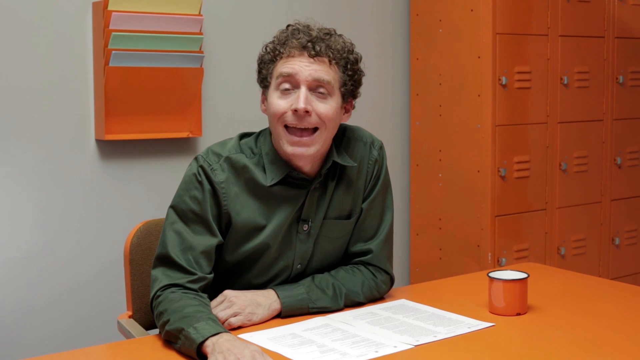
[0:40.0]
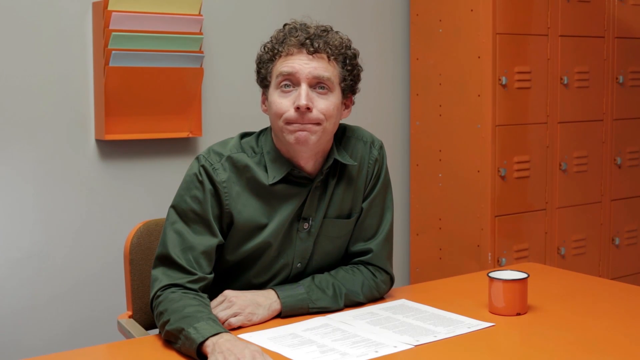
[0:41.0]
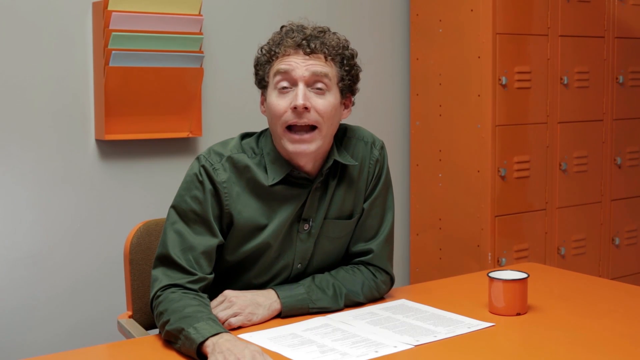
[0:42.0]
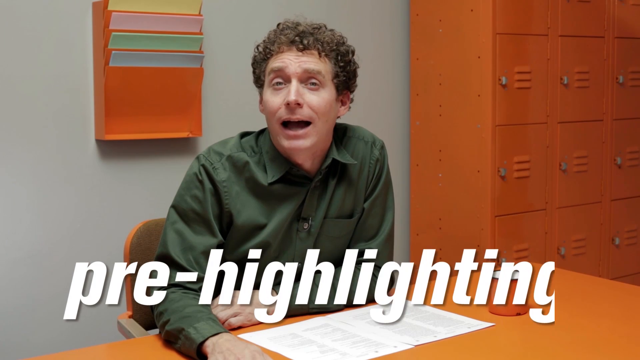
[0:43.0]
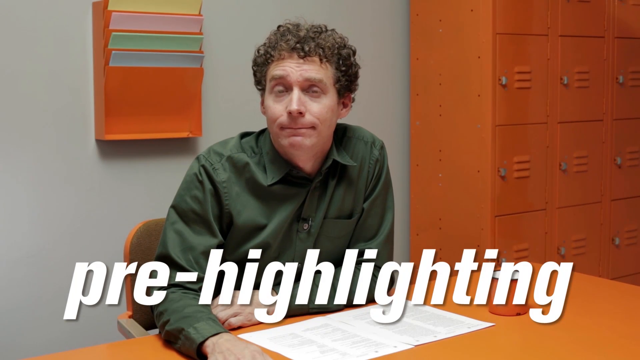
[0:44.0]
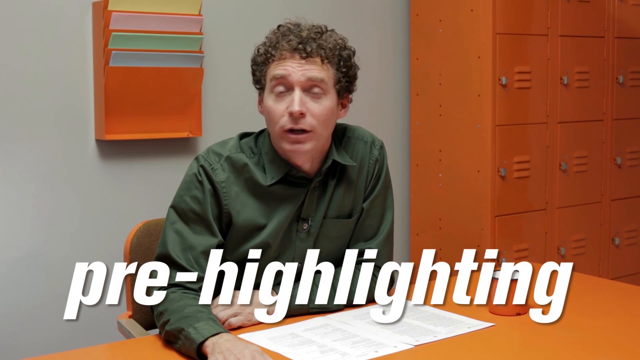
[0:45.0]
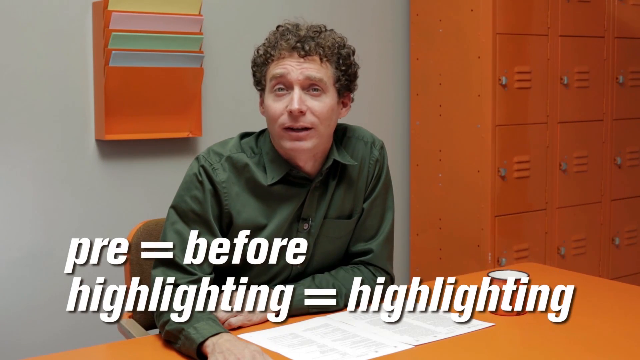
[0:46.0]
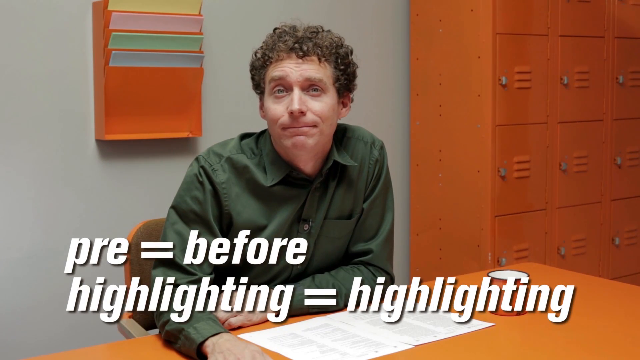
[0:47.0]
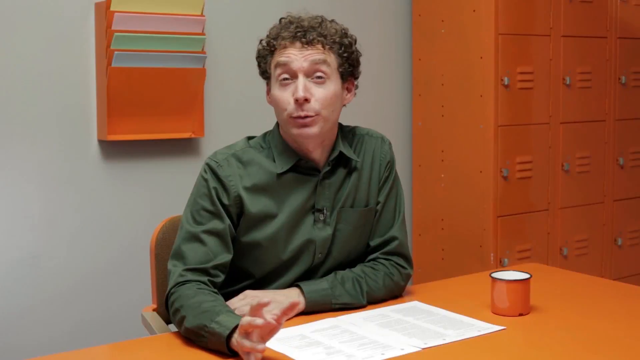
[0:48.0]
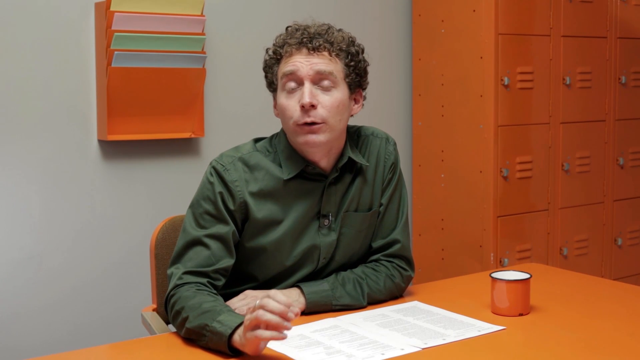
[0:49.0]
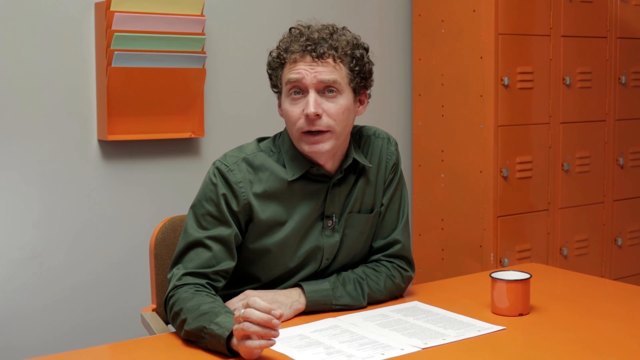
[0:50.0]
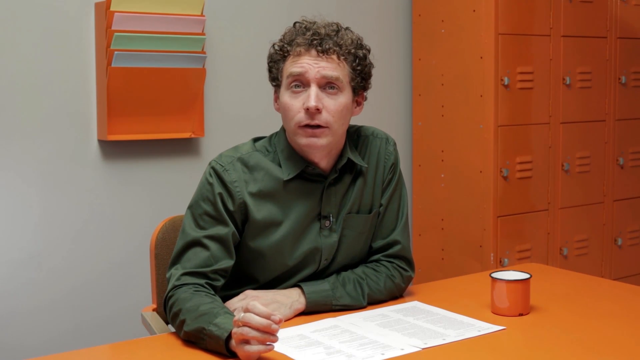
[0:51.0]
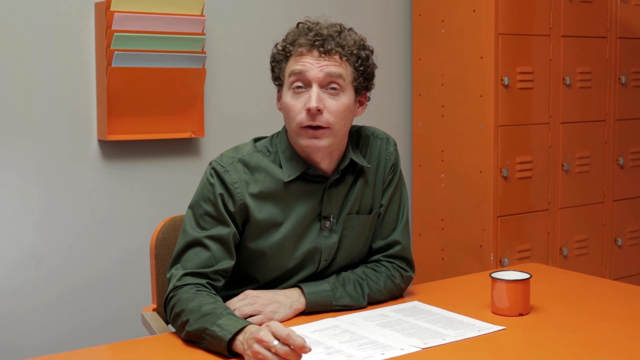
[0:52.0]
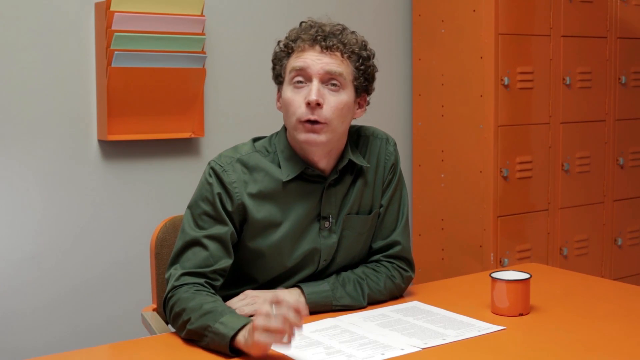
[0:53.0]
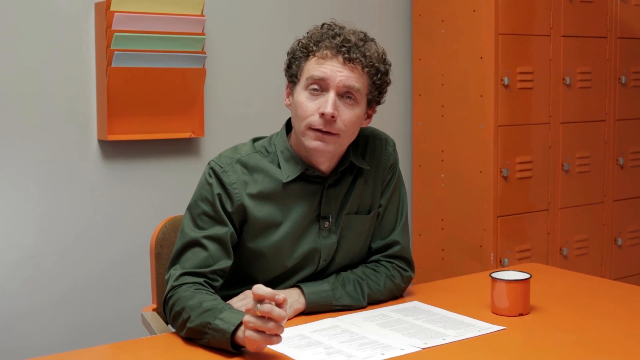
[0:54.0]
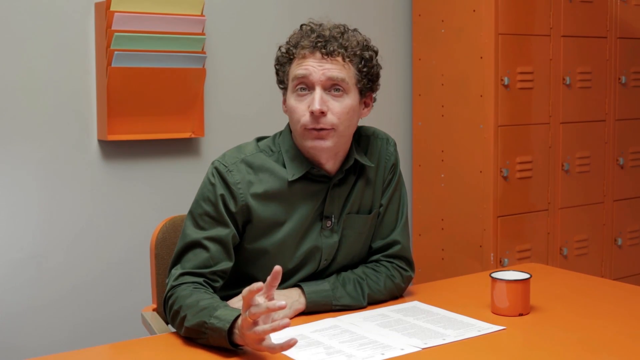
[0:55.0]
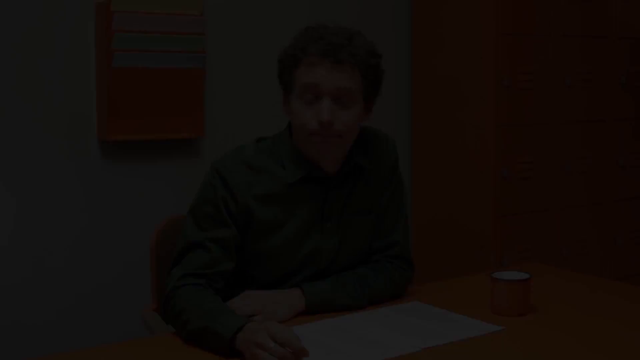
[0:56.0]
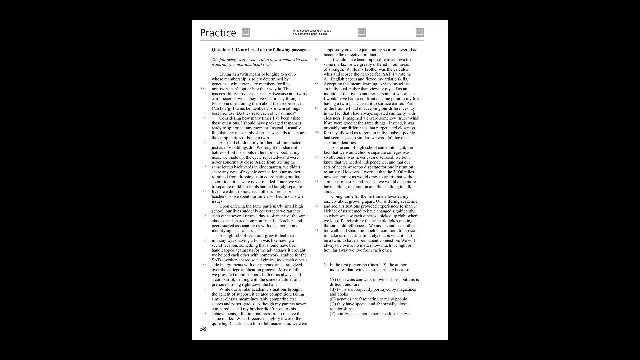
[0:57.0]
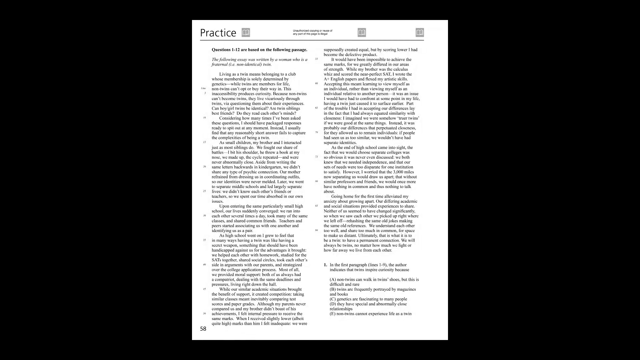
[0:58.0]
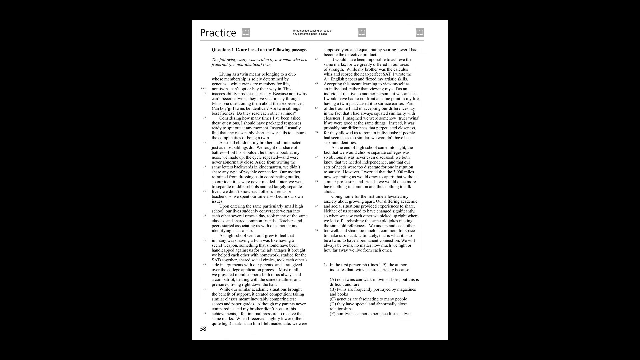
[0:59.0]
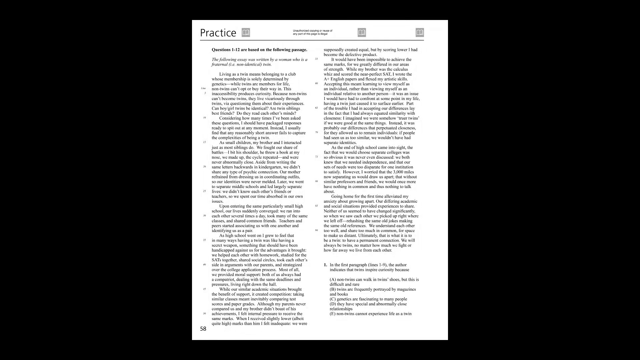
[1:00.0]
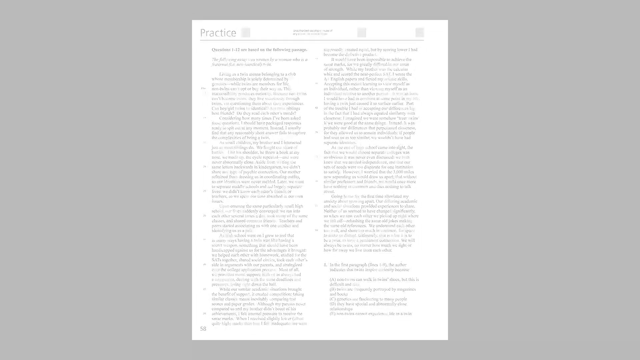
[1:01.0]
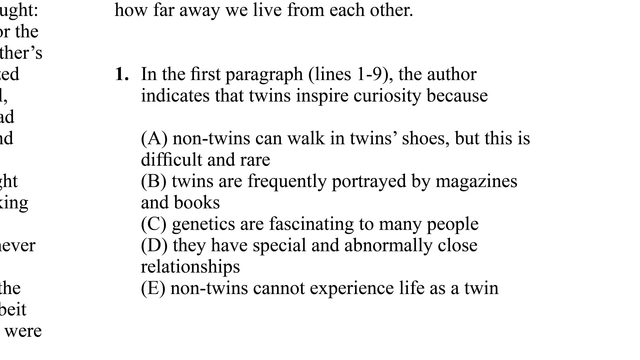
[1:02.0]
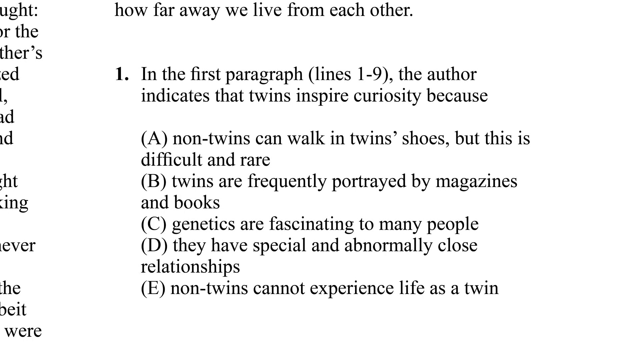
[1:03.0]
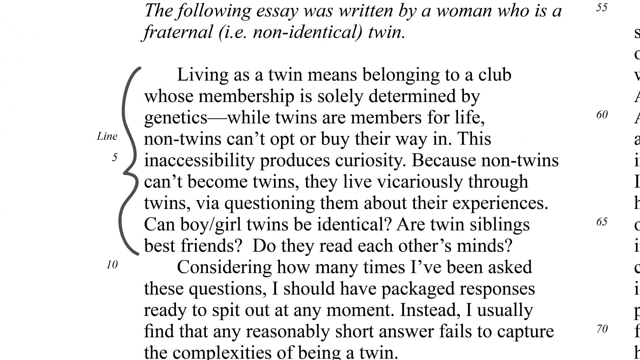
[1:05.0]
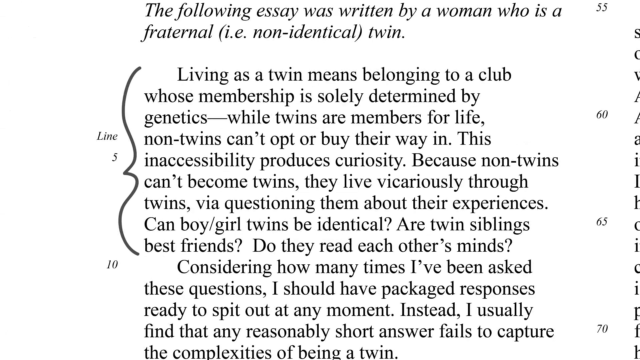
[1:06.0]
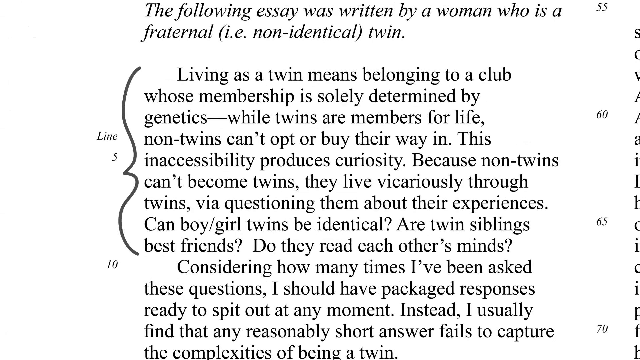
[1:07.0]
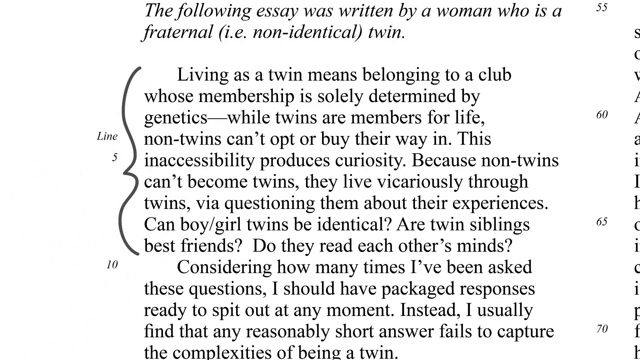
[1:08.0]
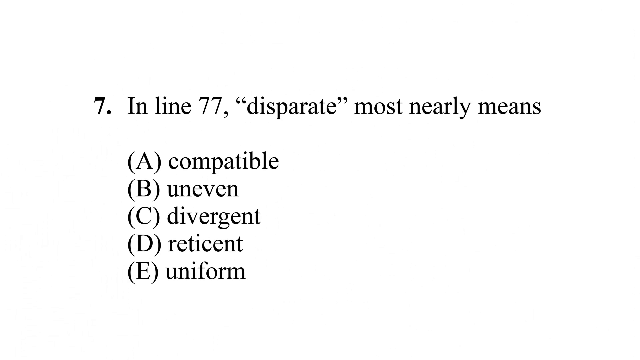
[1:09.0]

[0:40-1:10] A man sits in a chair in front of a desk. He is a clean-shaven white male with short curly brown hair, wearing a green long-sleeve button-up shirt with a collar. One arm is extended and resting on the desk in front of him, and the other is bent toward his body, also resting on the desk. The room has white walls. Behind him on the left is an orange mounted file storage unit on the wall holding blue, green, pink, and yellow sheets of paper. On the right is an orange locker storage unit with 12 lockers visible. On the desk in front of him are an orange mug and two sheets of paper. He talks to the camera, and the words "pre-highlighting" appear across the bottom of the screen in large text. The words then change to "pre equals before" with "highlighting equals highlighting" underneath. After a quick flash, the words disappear and the man continues to talk. An image of a document then appears: a single sheet of paper in the middle of a black background, with the word "practice" at the top and two columns of text filling the whole page. The view zooms in on a section reading "number one, in the first paragraph, (lines one to nine), the author indicates that twins inspire curiosity because A, non-twins can walk in twins' shoes, but this is difficult and rare, B, twins are frequently portrayed by magazines and books, C, genetics are fascinating to many people, D, they have special and abnormally close relationships, E, non-twins cannot experience life as a twin." It then zooms in on a different section, marked with a squiggle on the side as the section to focus on, which reads "Living as a twin means belonging to a club whose membership is solely determined by genetics. While twins are members for life, non-twins can't opt or buy their way in. This inaccessibility produces curiosity because non-twins can't become twins. They live vicariously through twins, via questioning them about their experiences. Can boy/girl twins be identical? Are twins siblings' best friends? Do they read each other's minds?" with further text underneath. The view then focuses on another section reading "In line 77, disparate most nearly means A. compatible B. uneven C. divergent D. reticent E. uniform."